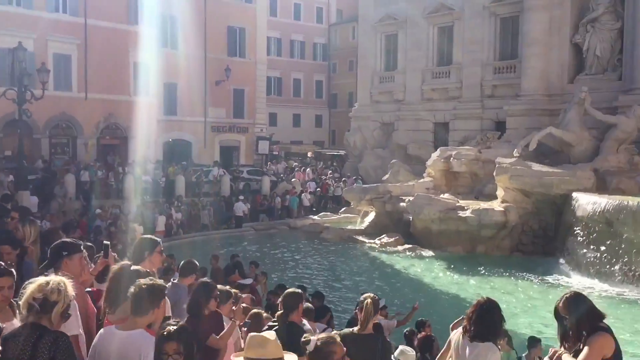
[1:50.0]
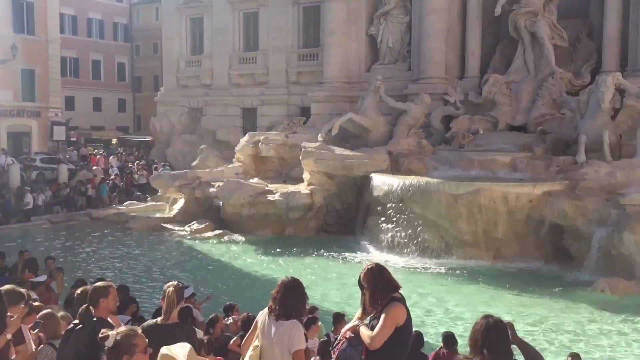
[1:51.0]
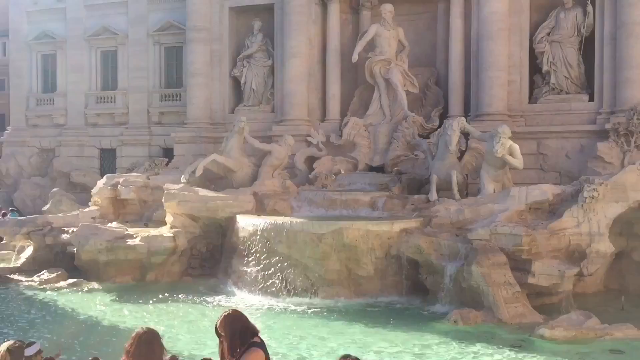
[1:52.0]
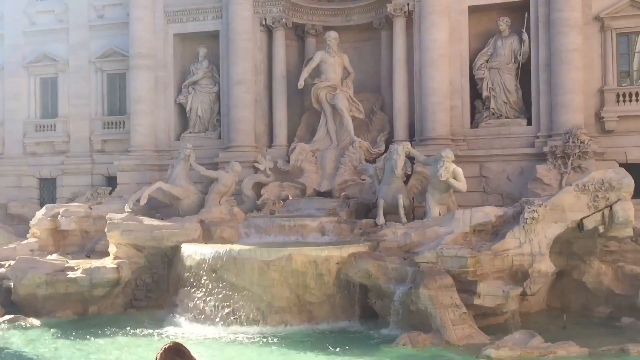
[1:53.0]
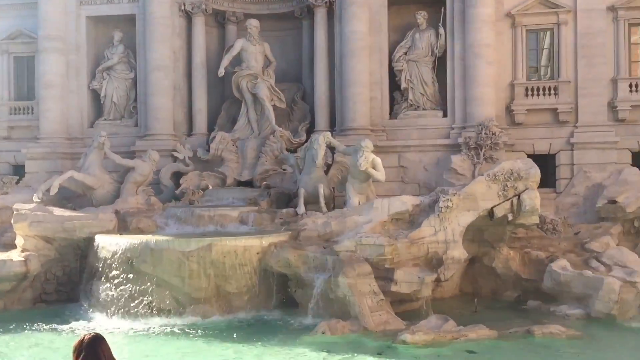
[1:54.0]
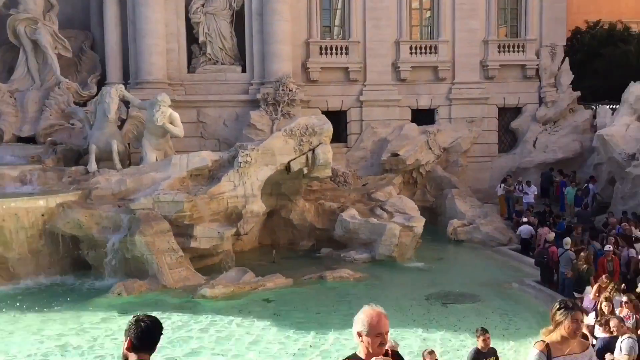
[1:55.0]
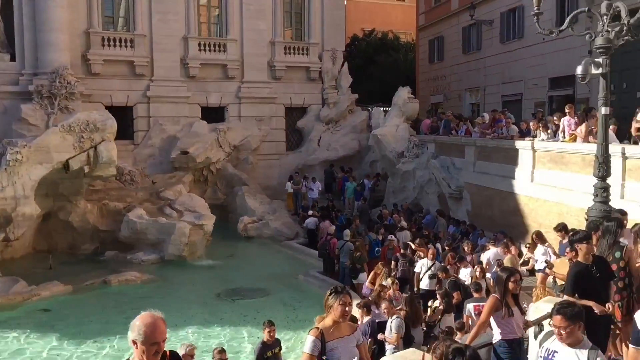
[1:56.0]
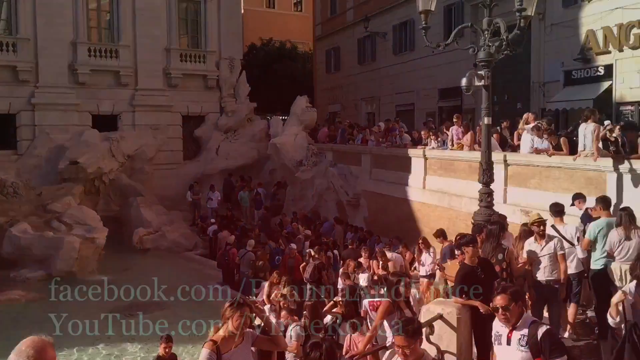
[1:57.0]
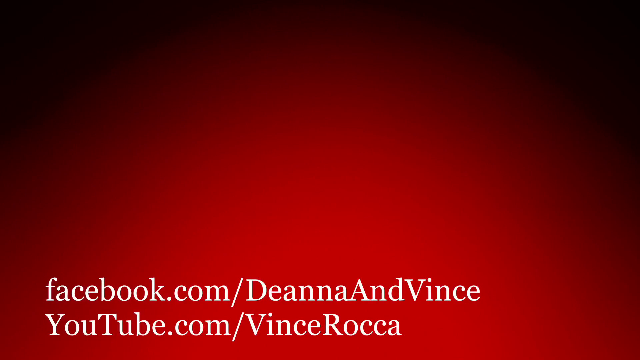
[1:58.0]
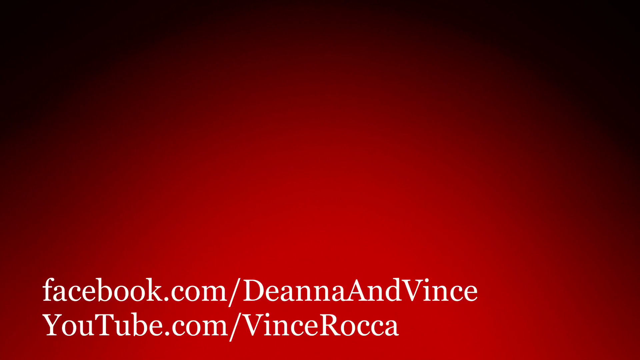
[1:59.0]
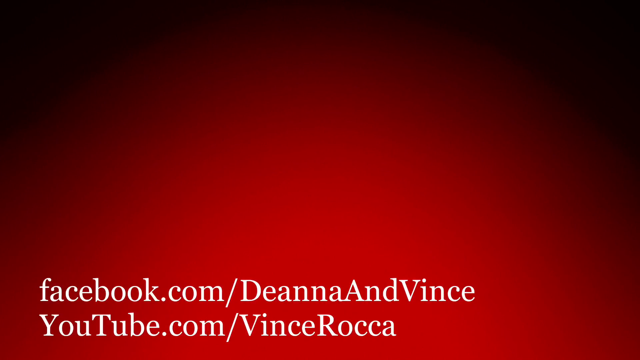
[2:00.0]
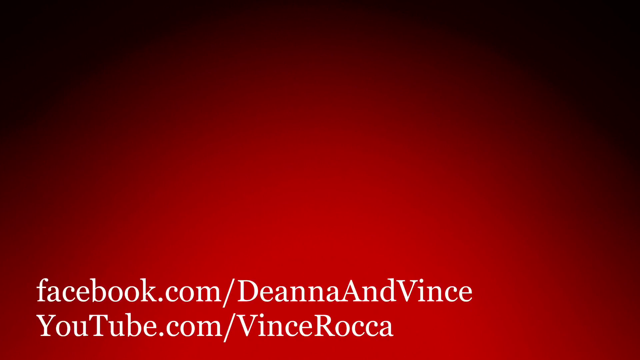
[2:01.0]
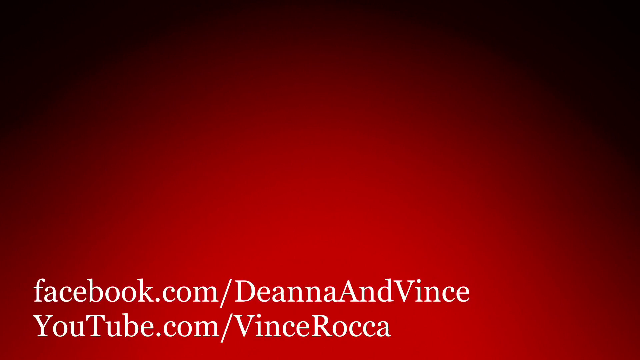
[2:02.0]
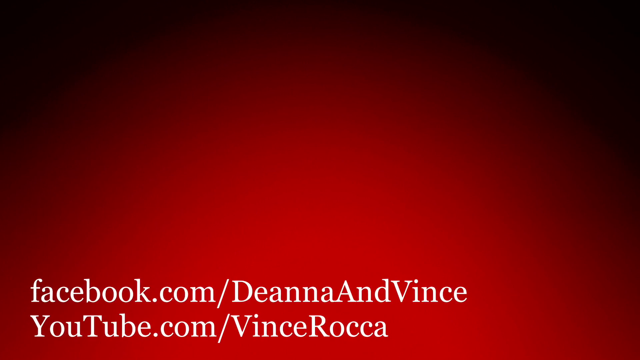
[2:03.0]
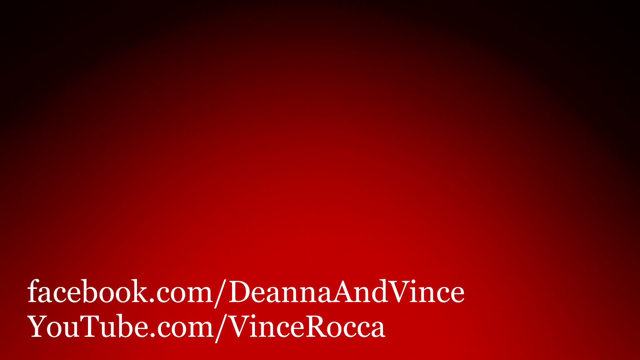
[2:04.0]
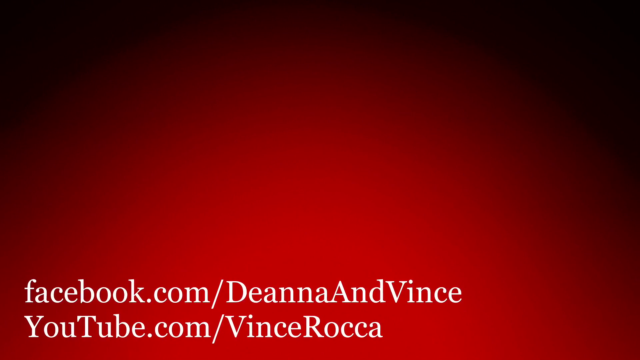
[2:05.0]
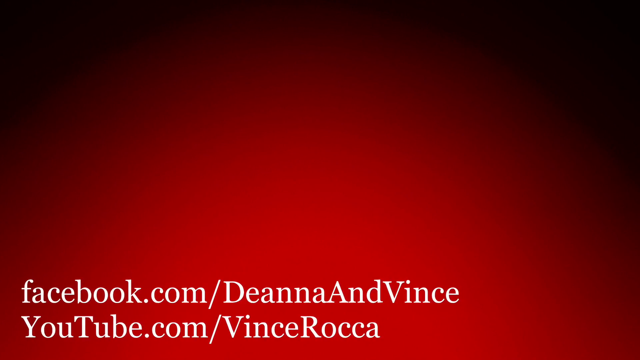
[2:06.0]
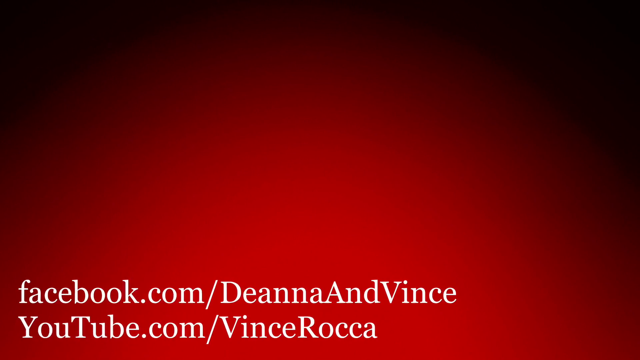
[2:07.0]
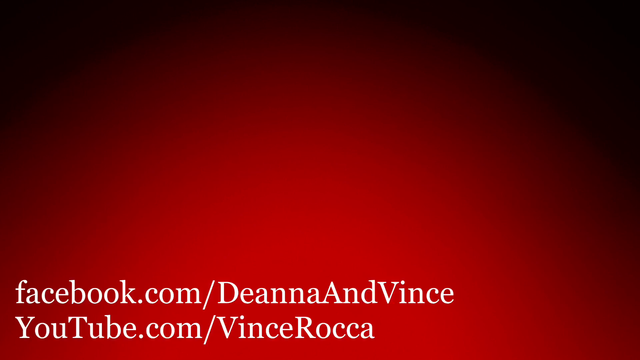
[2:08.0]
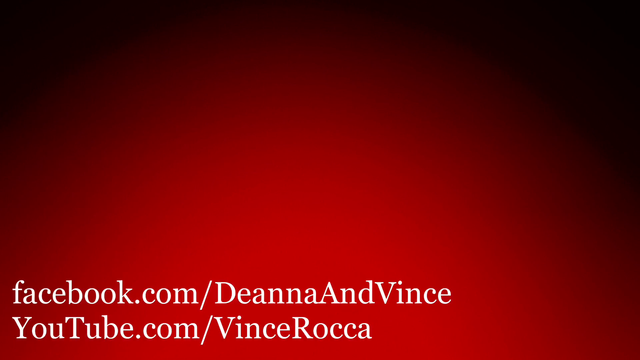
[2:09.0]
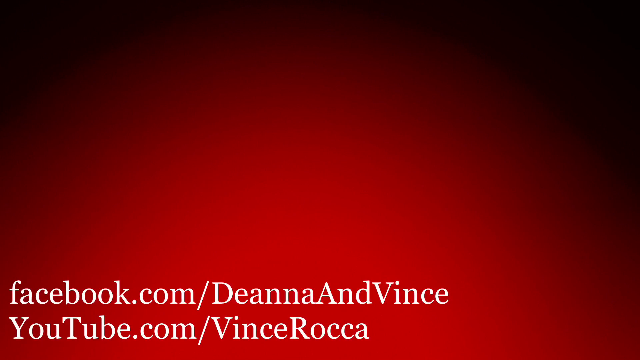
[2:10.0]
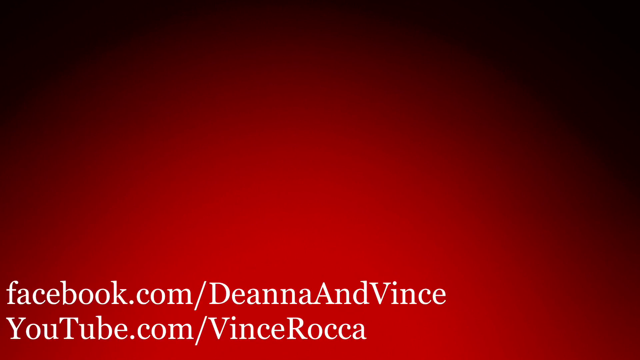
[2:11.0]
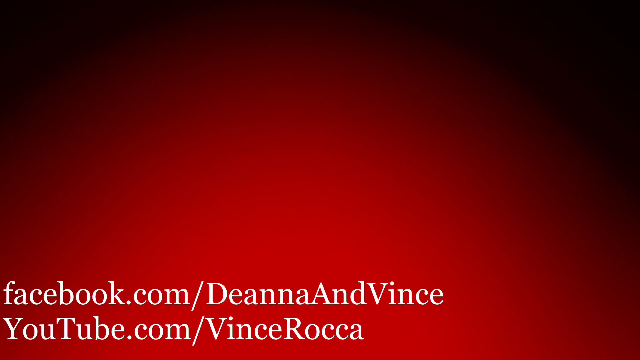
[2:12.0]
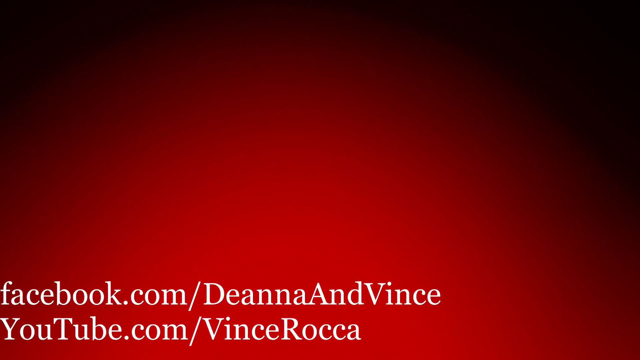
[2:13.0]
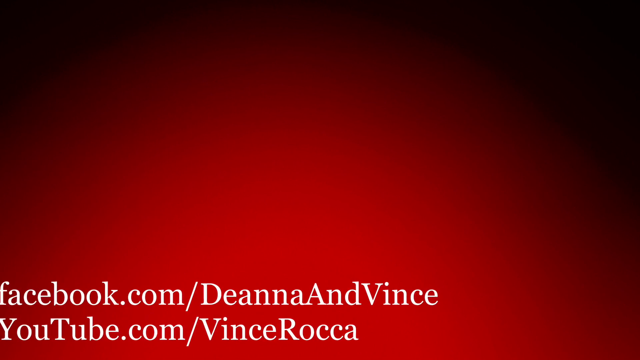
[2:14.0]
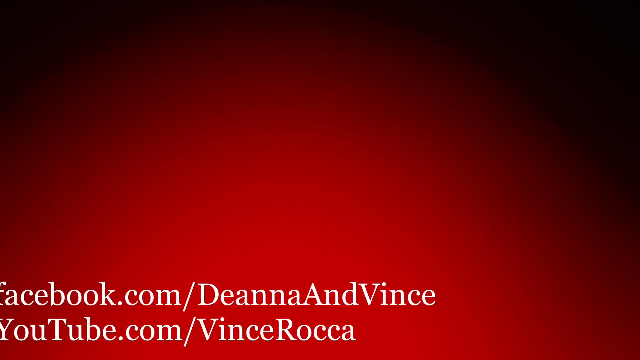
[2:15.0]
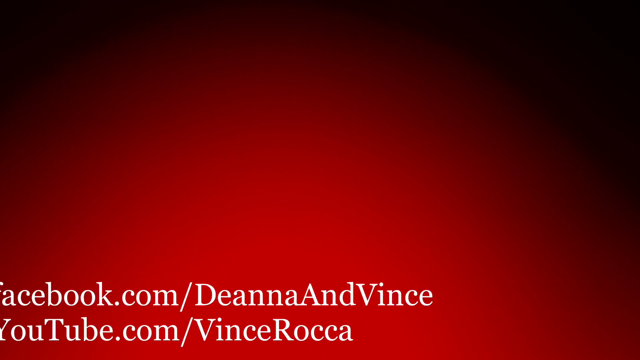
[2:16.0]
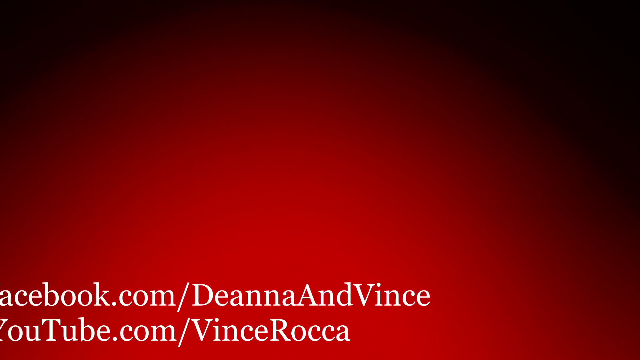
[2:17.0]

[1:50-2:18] The Trevi Fountain in Rome appears with a large crowd wrapped around the pool on the left side. The camera pans over and focuses on the front of the fountain: the rear wall with its large central statue of Neptune riding a chariot driven by two seahorses, and two additional statues in large niches on either side facing him. The facade is made of white stone and marble. The camera then pans to the right side, showing more of the crowd wrapped around the fountain's pool and people gathered on a terrace above. At the very end, a red screen appears with "facebook.com/DeannaAndVince" at the bottom and, below that, "Youtube.com/Vince Rocca".